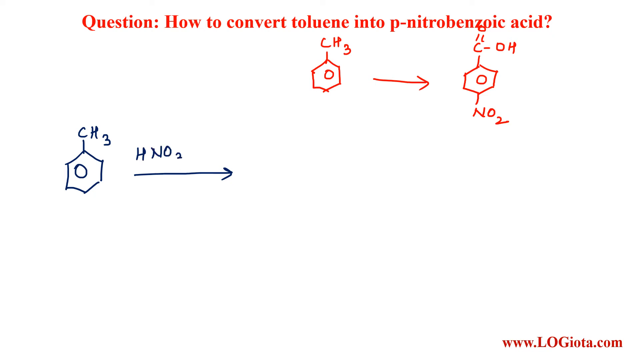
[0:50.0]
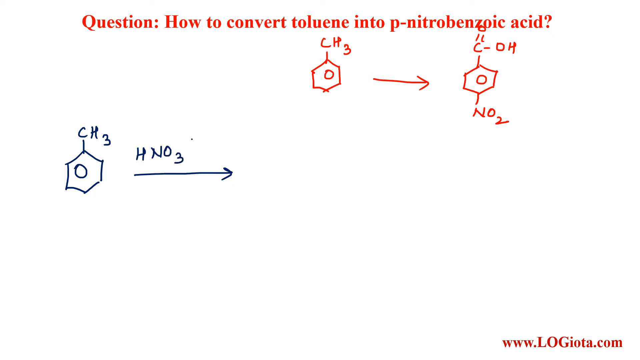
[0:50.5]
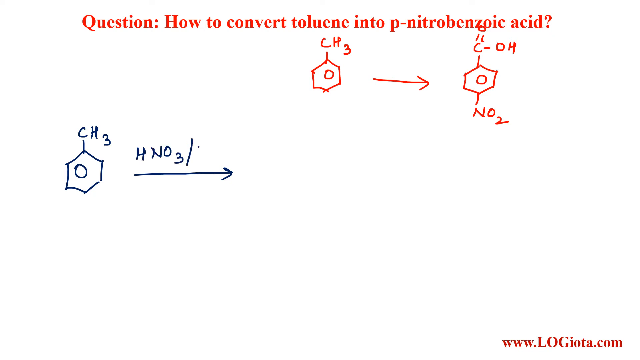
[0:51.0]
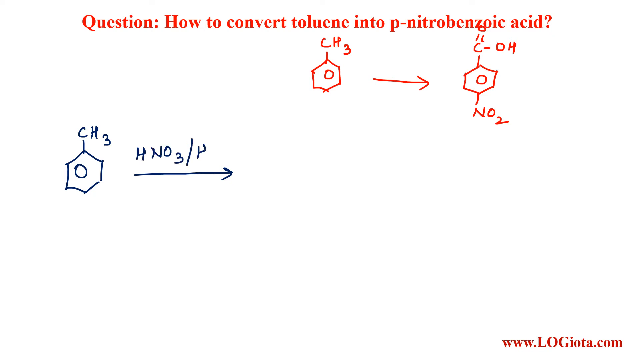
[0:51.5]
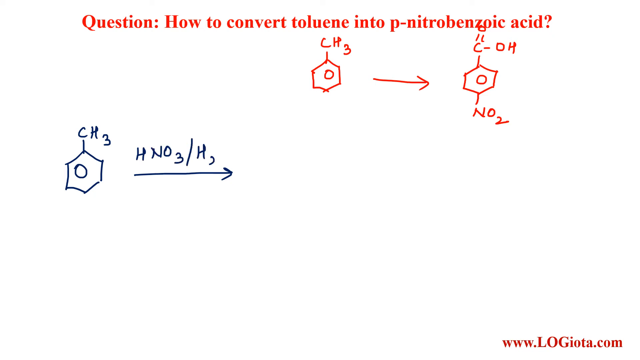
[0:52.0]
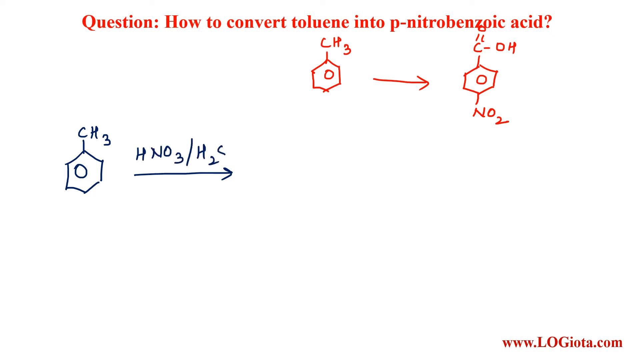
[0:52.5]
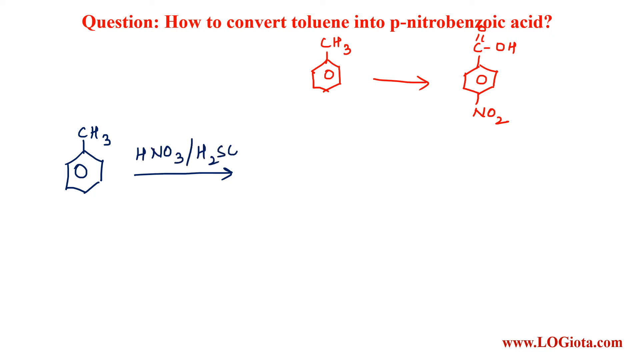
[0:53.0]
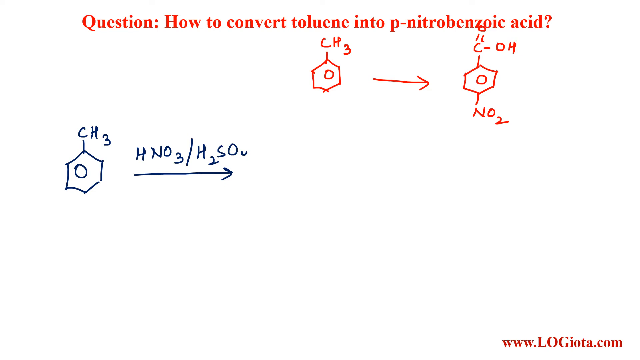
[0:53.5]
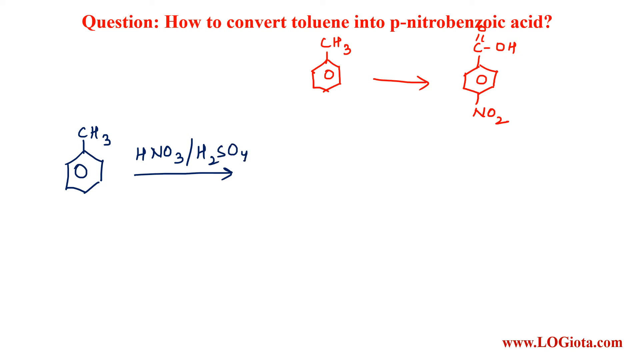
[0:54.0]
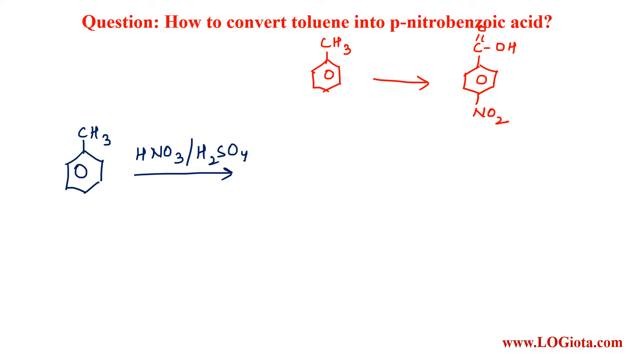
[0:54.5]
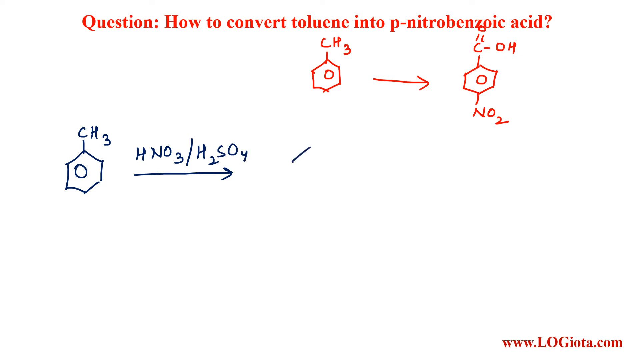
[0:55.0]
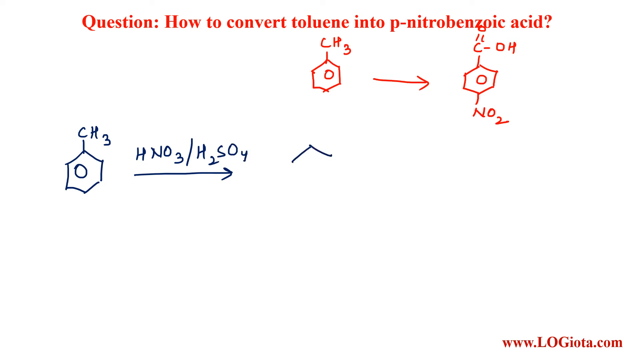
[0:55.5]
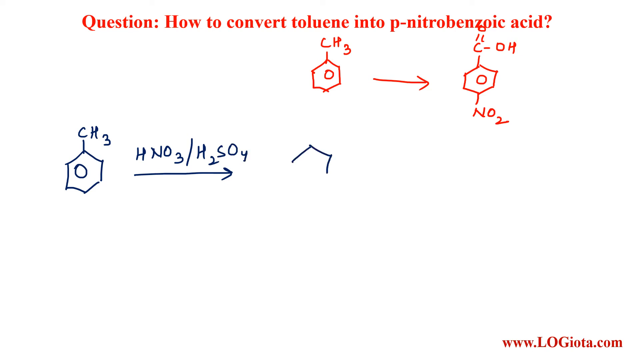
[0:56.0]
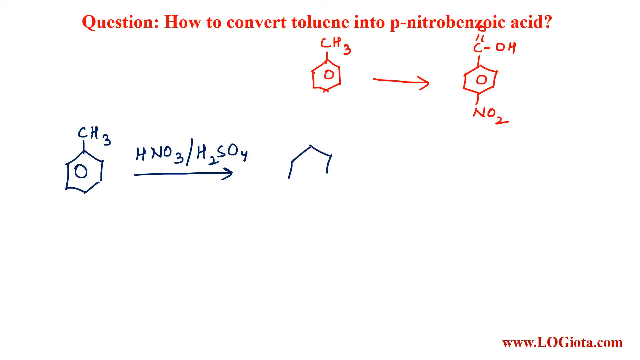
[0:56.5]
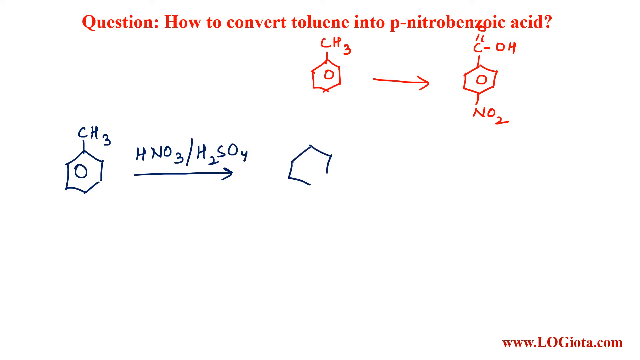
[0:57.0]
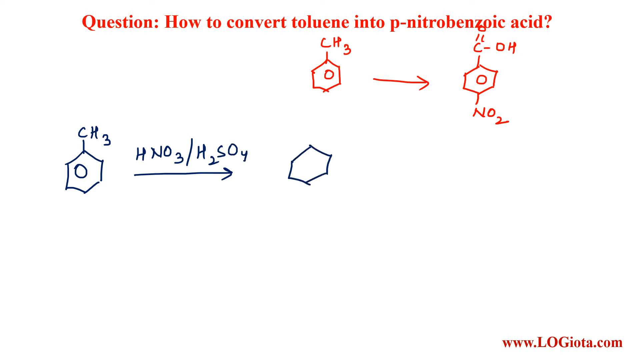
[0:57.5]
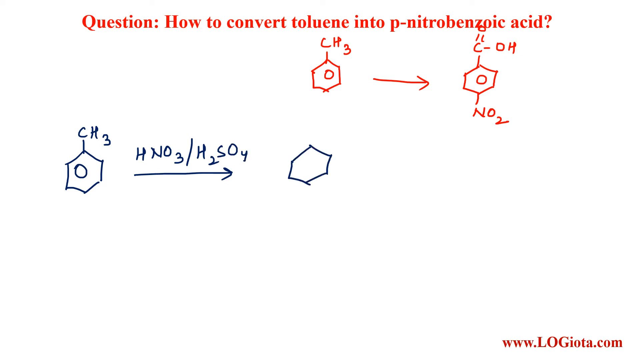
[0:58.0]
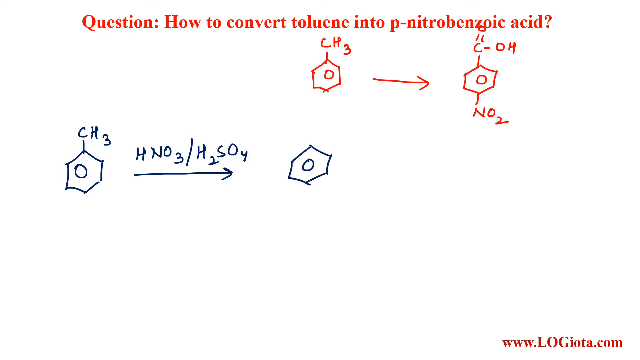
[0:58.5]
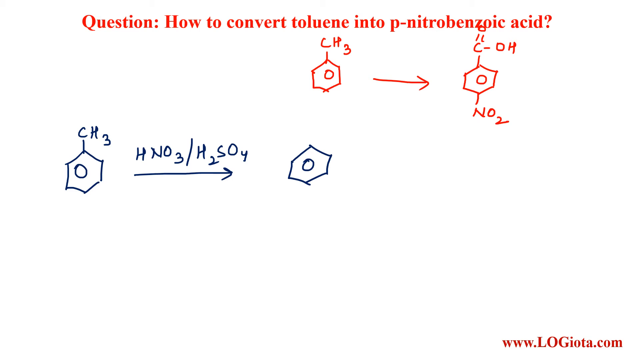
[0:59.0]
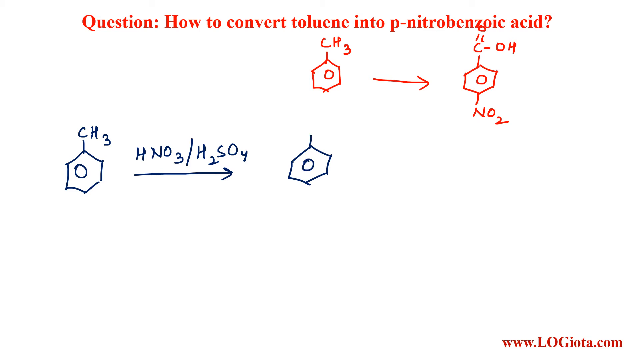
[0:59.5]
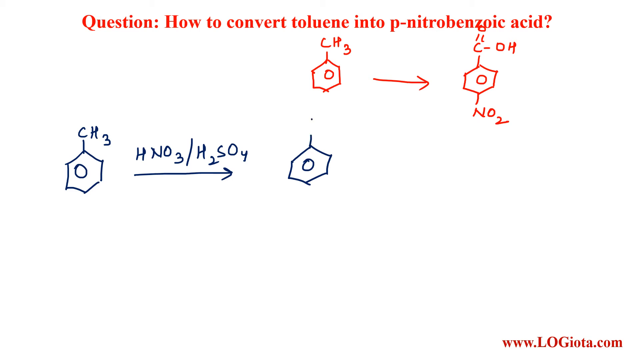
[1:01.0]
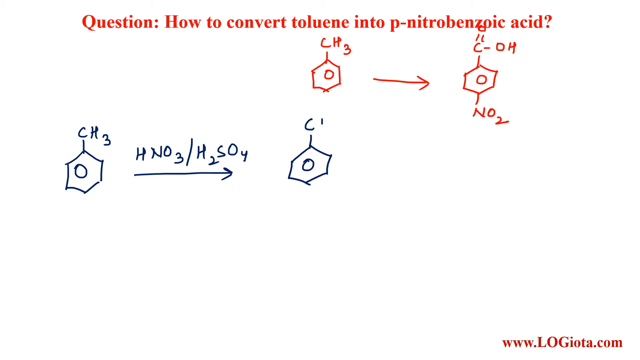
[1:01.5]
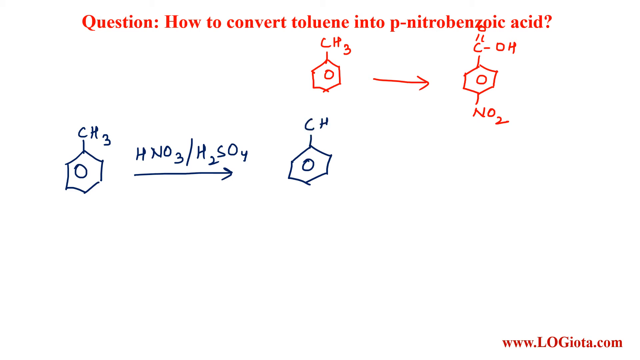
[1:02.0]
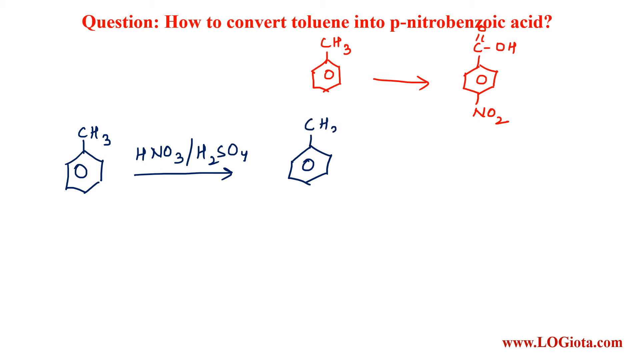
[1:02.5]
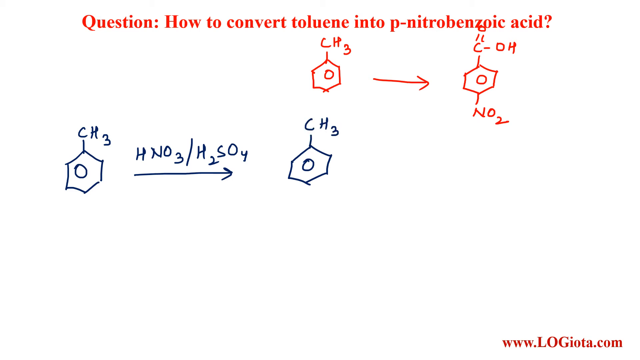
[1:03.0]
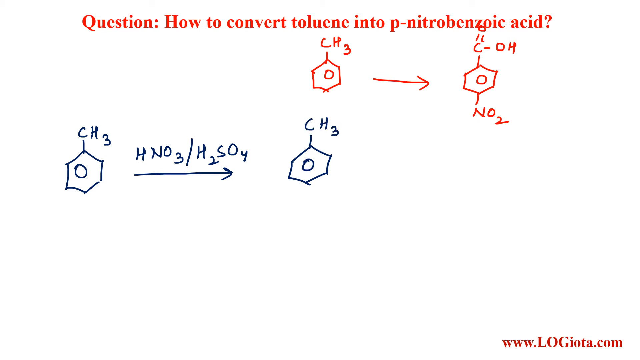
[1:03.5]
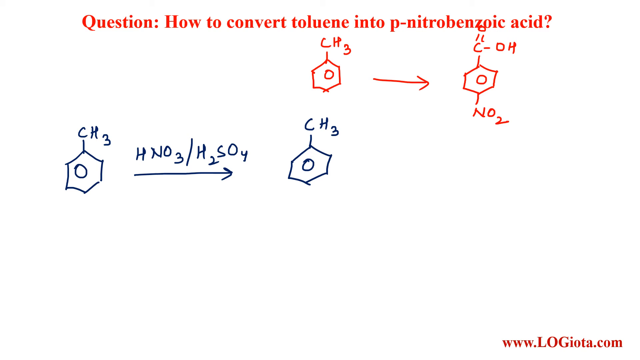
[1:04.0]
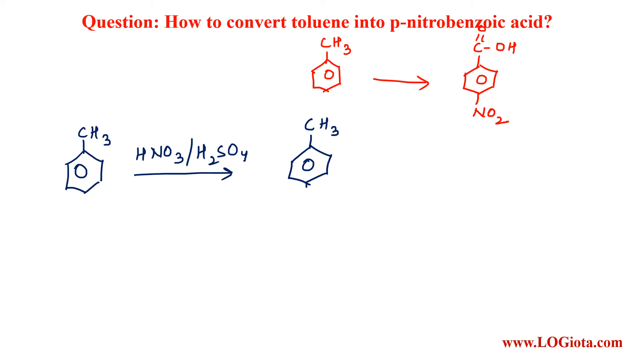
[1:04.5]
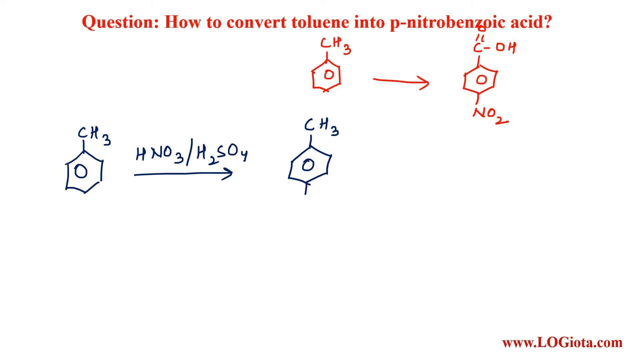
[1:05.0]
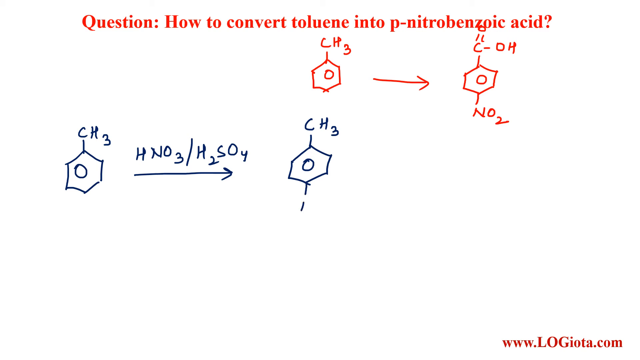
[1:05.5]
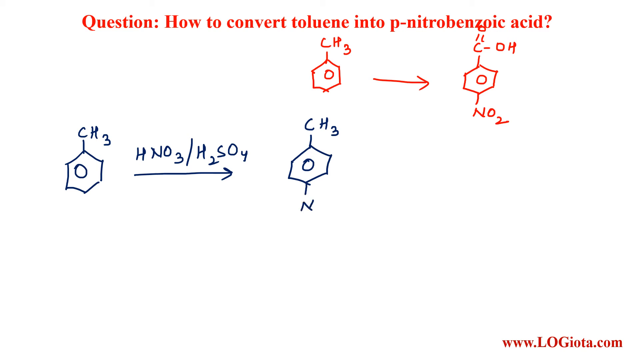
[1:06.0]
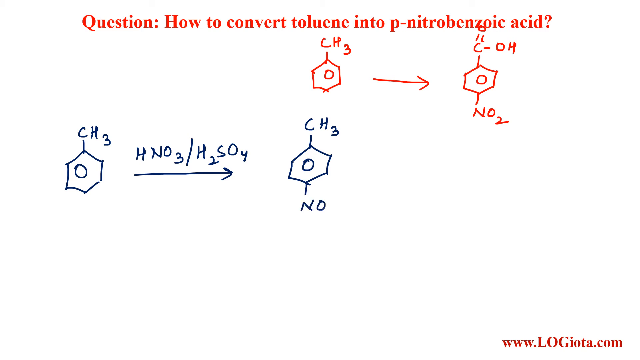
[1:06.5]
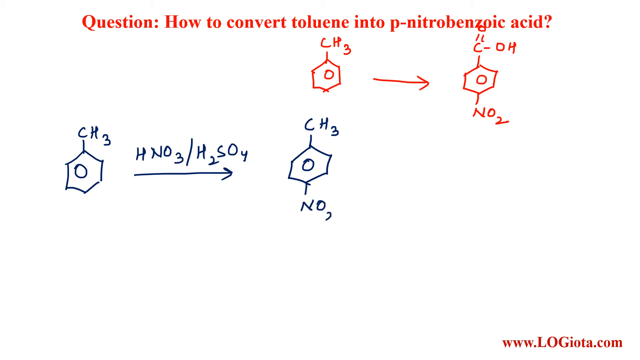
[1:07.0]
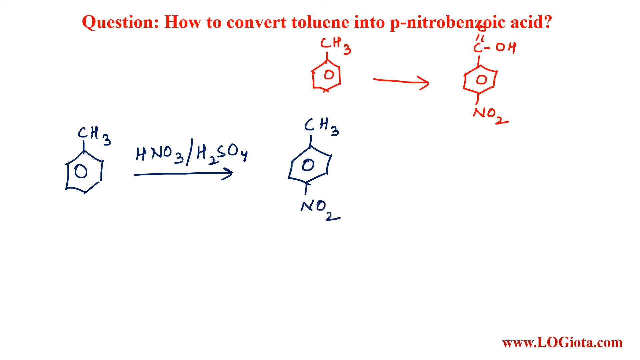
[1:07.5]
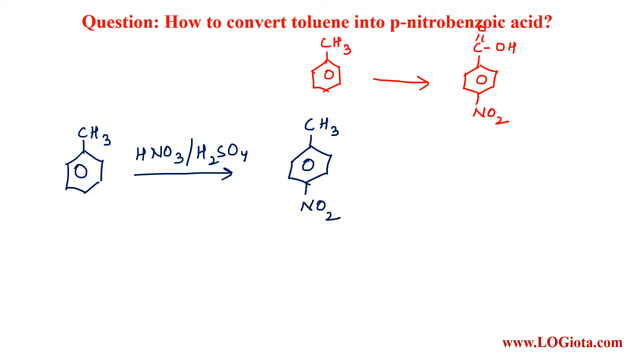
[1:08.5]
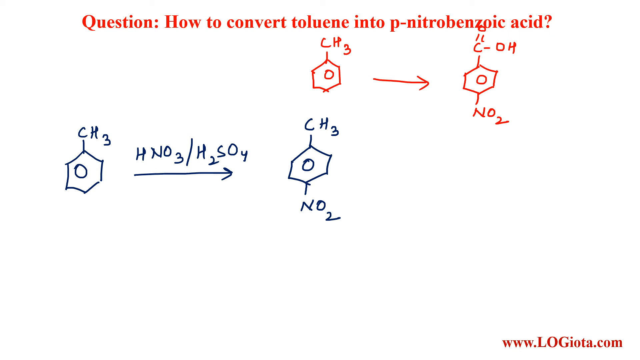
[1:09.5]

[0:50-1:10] The instructor continues drawing on the blue line with the arrow pointing to the right, adding "/H2SO4" at the top so that it reads "HNO3/H2SO4". The arrow points to a newly drawn structure, apparently the compound being converted into P nitrobenzoic acid. The instructor draws "CH3" over this one, and the blue arrow in the center of the screen points to this CH3 and O structure. At the bottom of it they write "NO2". The formula looks somewhat changed: the top-right structure says "HC", while this one says "CH".